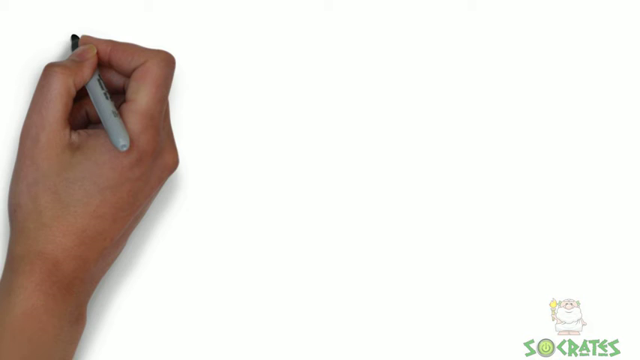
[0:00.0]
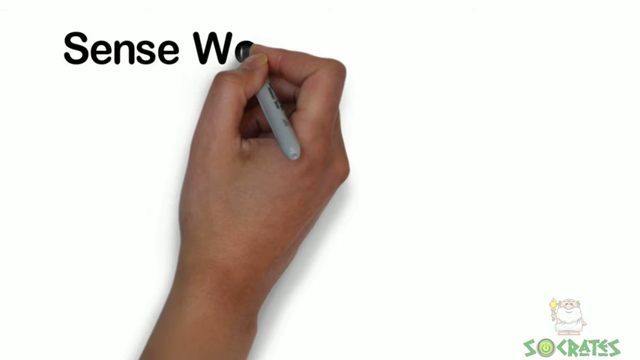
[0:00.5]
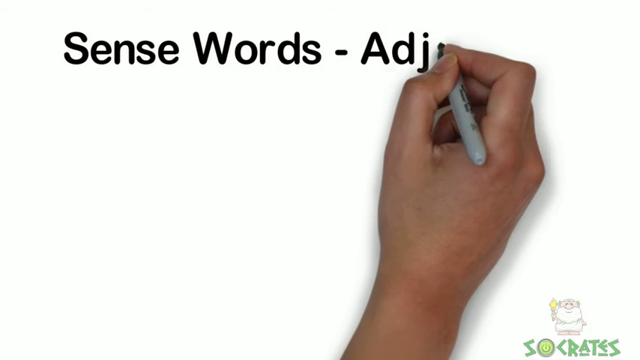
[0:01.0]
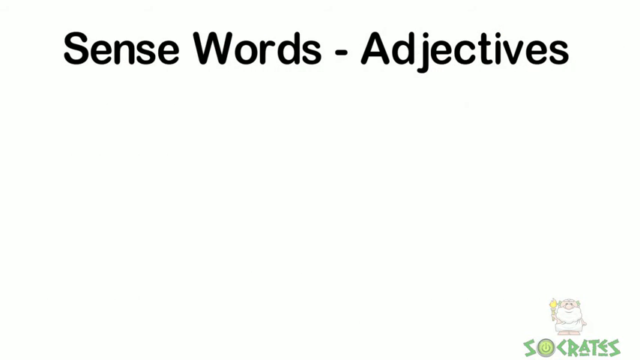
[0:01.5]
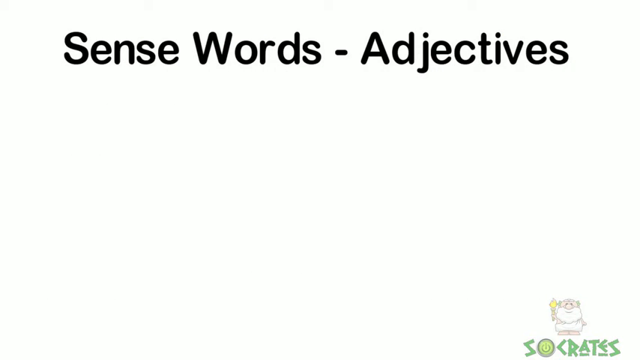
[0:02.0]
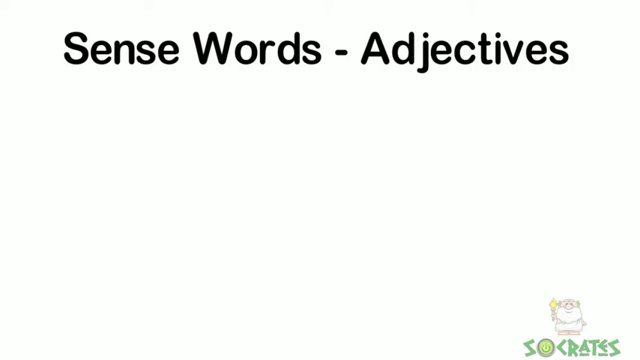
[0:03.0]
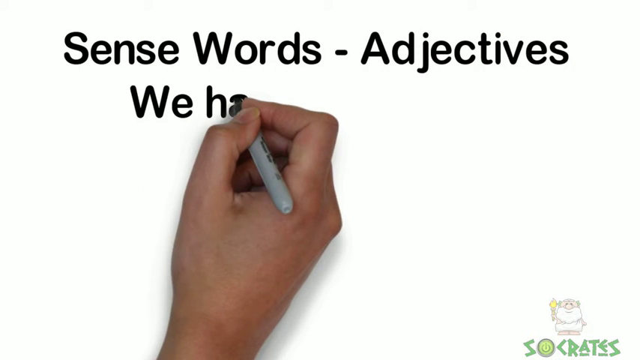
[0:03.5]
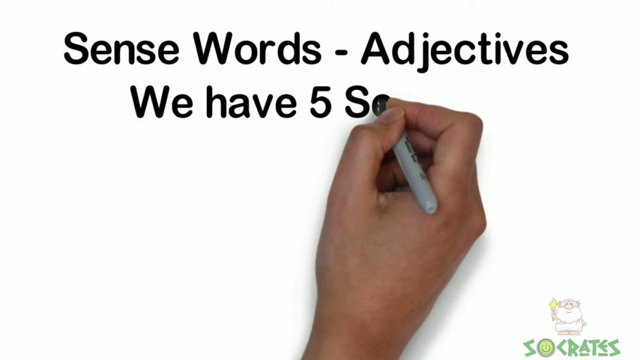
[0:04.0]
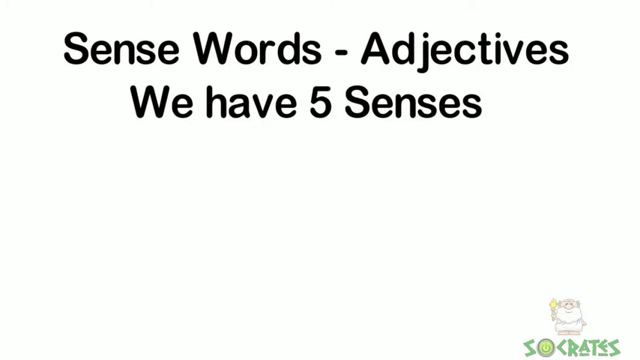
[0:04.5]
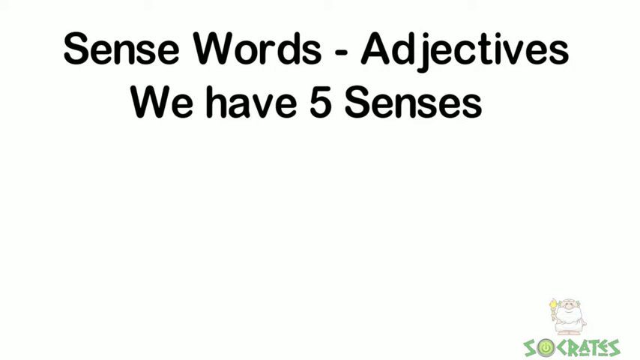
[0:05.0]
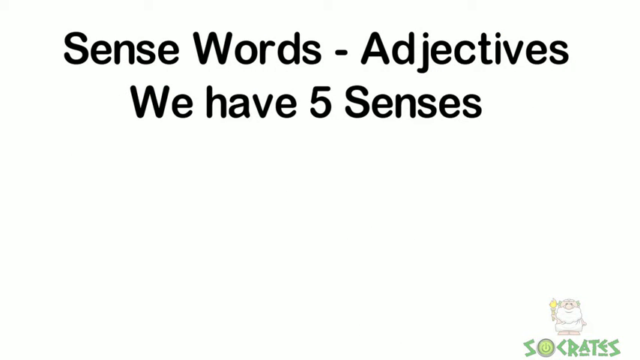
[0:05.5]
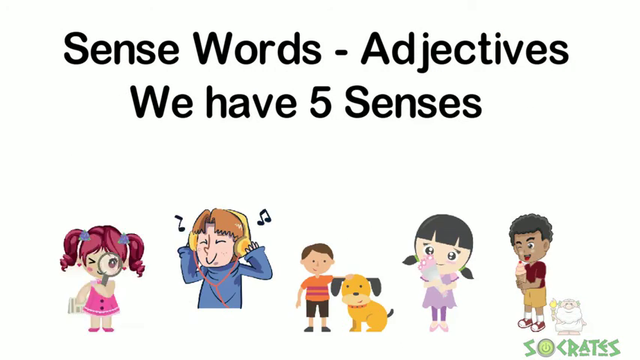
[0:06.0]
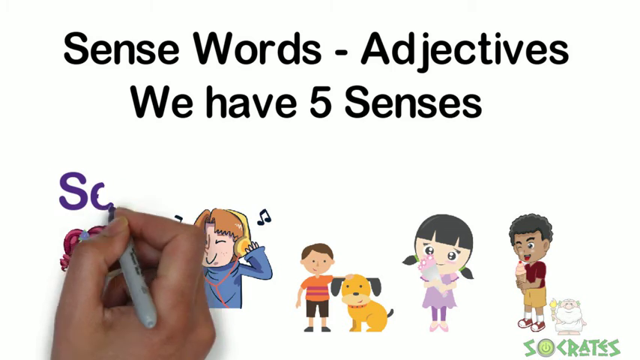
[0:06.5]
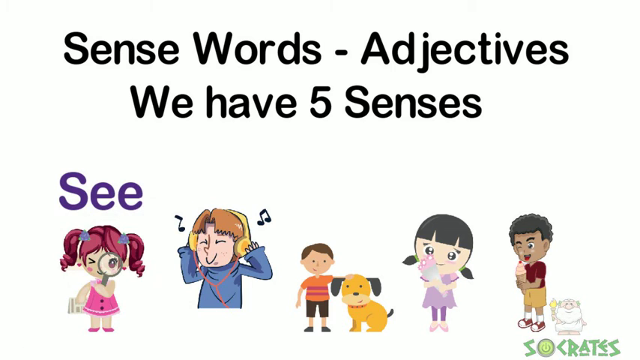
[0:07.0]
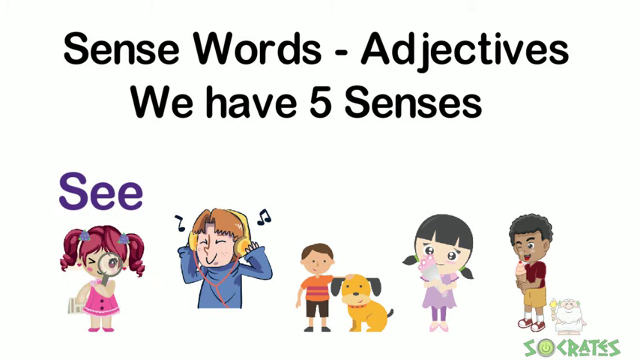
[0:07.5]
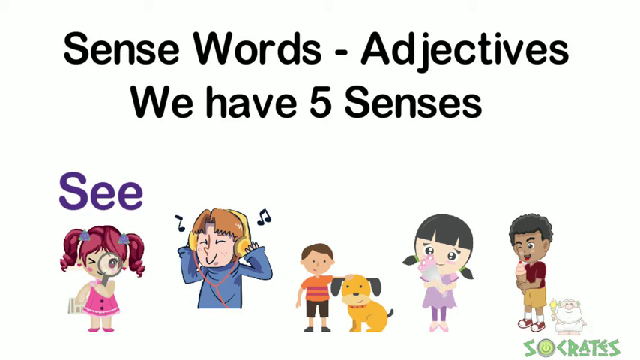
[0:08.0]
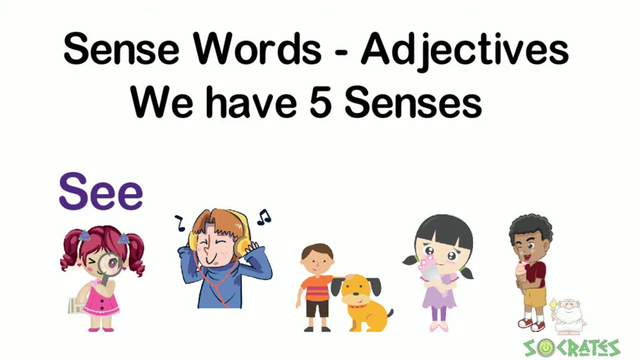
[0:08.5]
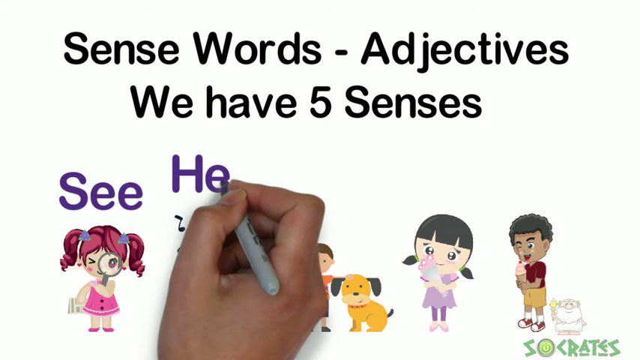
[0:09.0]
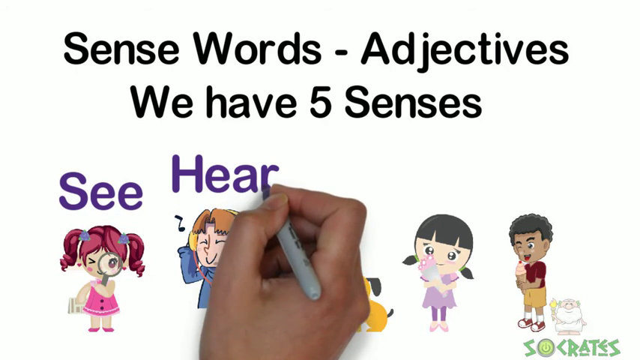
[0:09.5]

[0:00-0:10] Text at the top reads "sense words, adjectives" and text at the bottom reads "we have five senses", all written in black on a white background. Along the bottom, starting from the left, are five images in the form of cartoons. The first is a girl holding her hands, with one right on her left eye; her hair is tied in a ponytail and she wears a pink dress. Next to her is a boy wearing yellow headphones with a music symbol on the sides, and a blue sweater. Next is a boy in black pants and a striped t-shirt, and next to him is a yellow dog with a red collar on its neck and two large ears. Next is a girl in a pink dress holding flowers in her hands, and then a boy in yellow short pants and a maroon t-shirt holding an ice cream. Above the girl on the far left the word "see" is written, and a word is written on the boy wearing headphones. A hand holding a faint gray marker writes the words in purple.